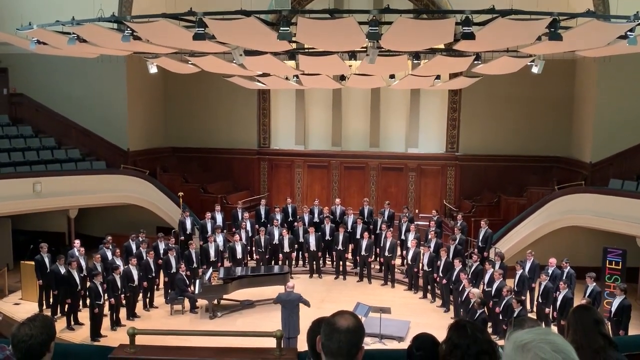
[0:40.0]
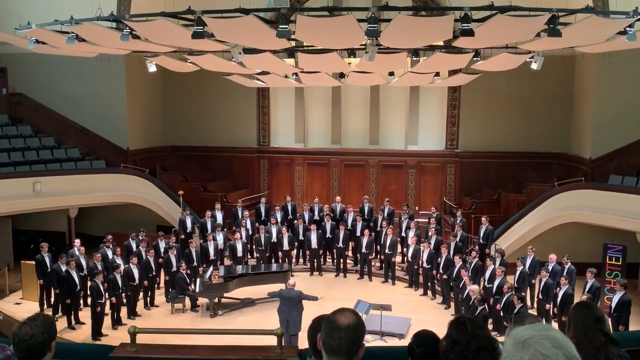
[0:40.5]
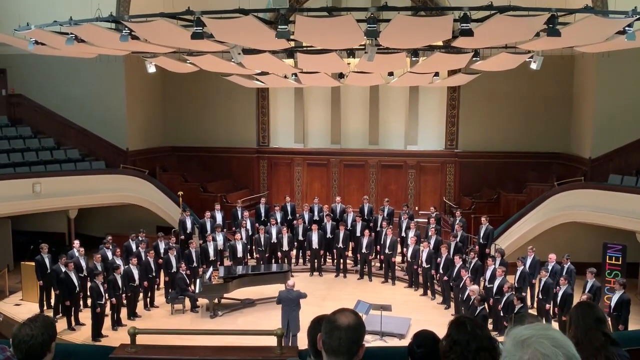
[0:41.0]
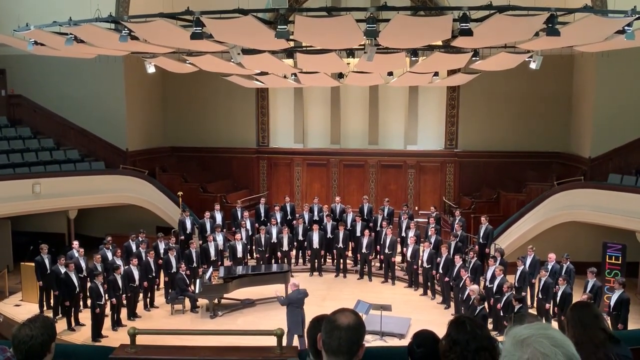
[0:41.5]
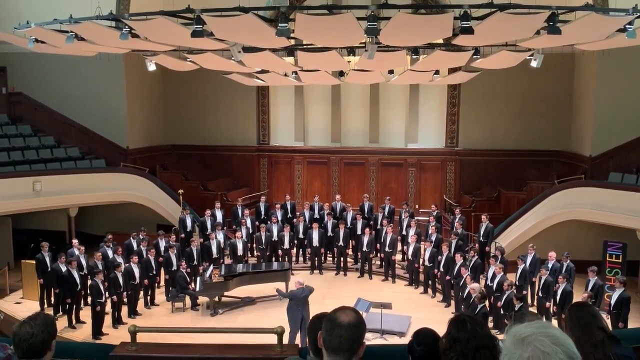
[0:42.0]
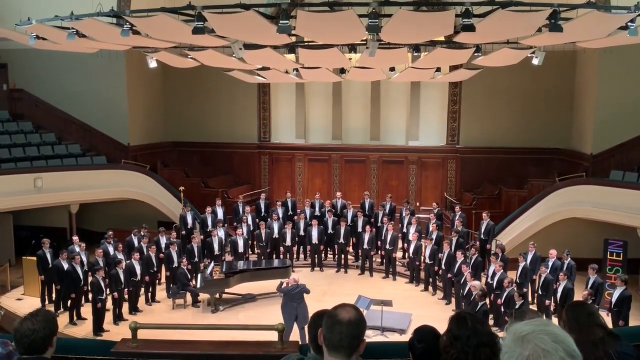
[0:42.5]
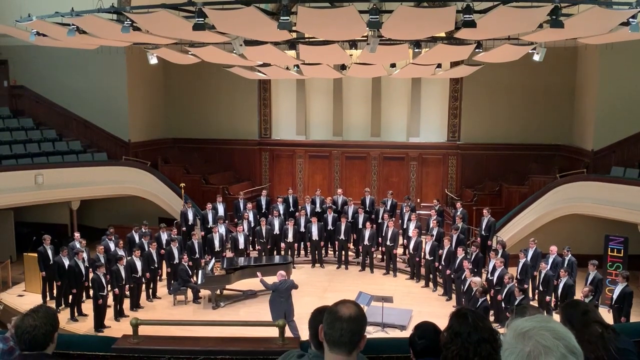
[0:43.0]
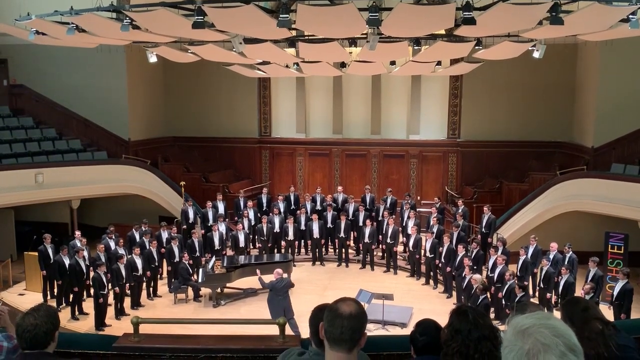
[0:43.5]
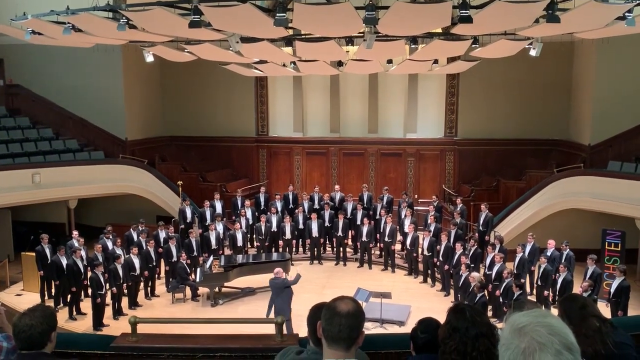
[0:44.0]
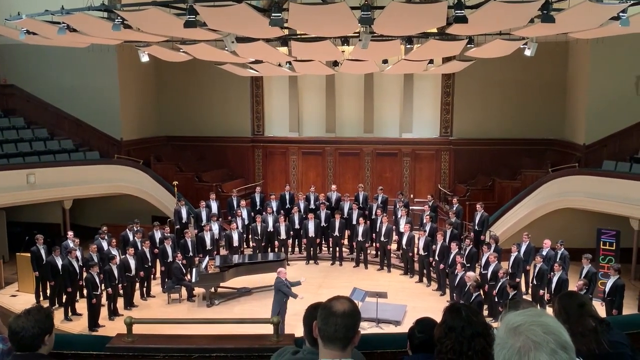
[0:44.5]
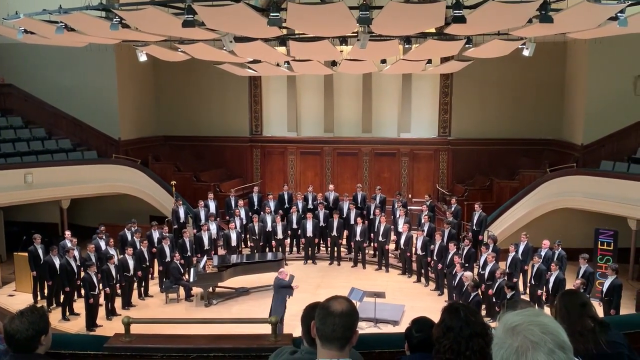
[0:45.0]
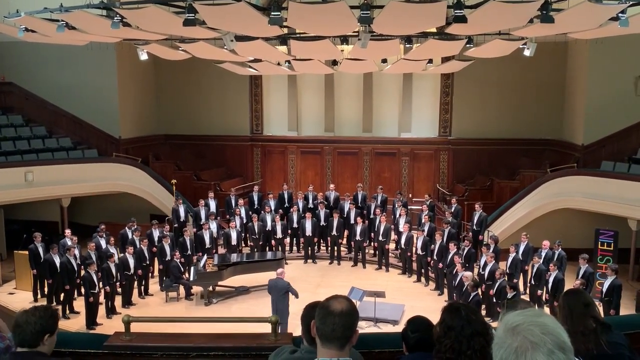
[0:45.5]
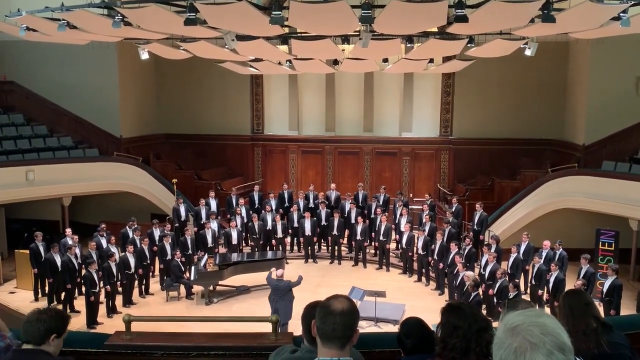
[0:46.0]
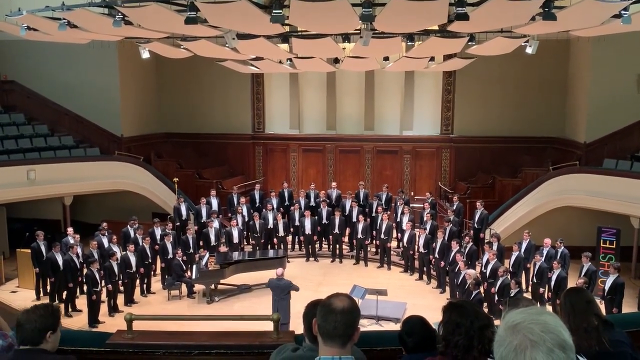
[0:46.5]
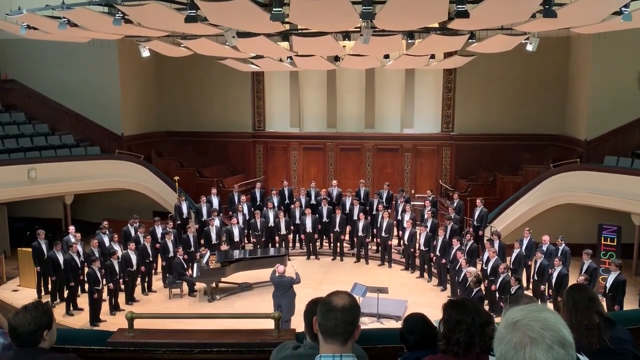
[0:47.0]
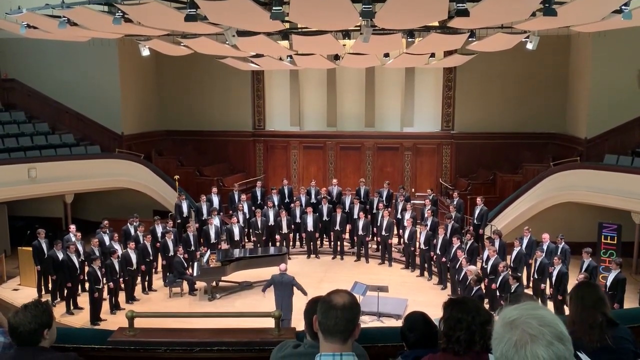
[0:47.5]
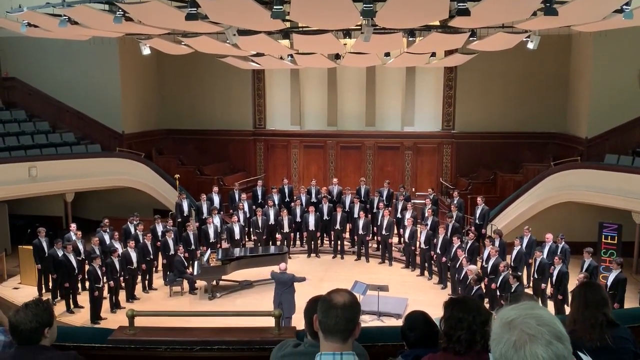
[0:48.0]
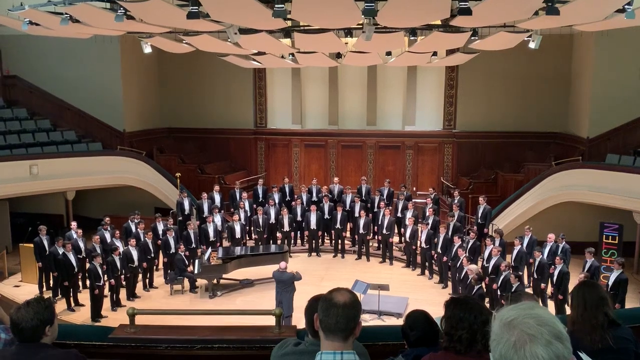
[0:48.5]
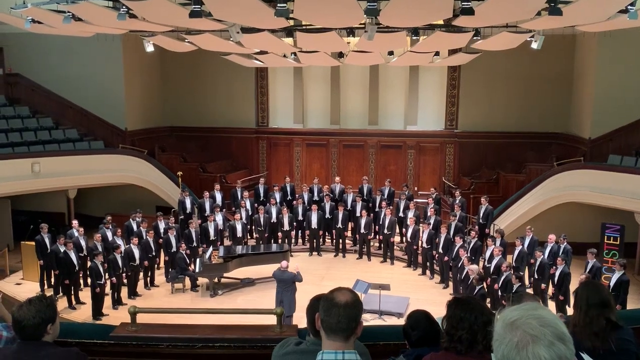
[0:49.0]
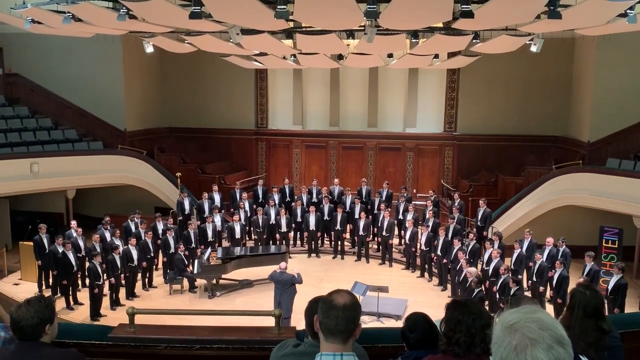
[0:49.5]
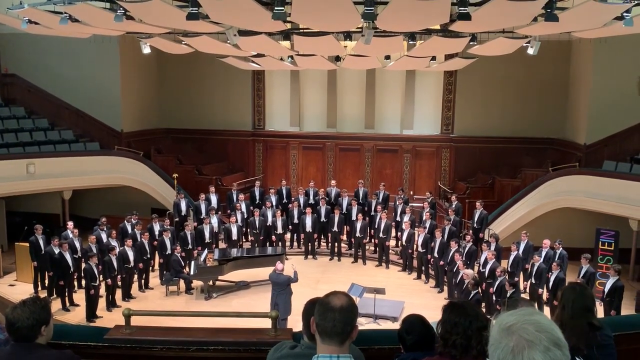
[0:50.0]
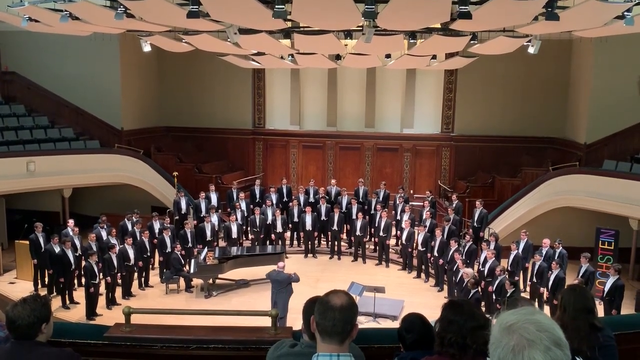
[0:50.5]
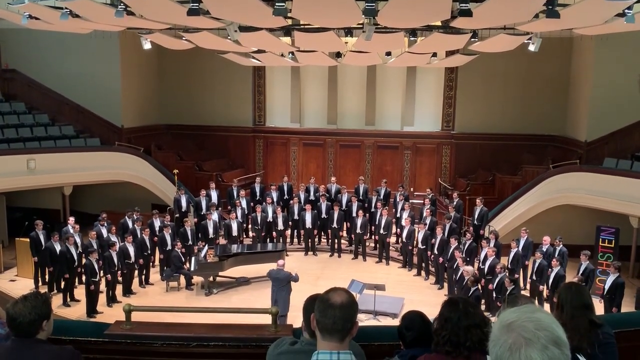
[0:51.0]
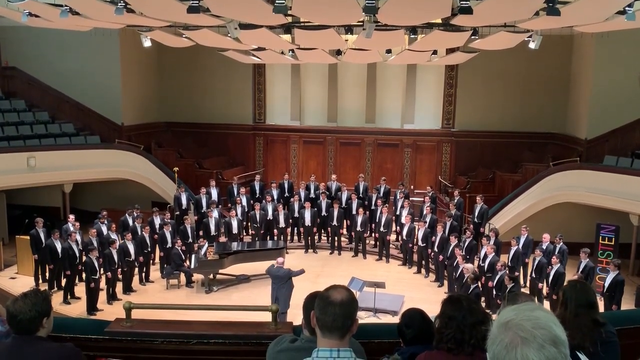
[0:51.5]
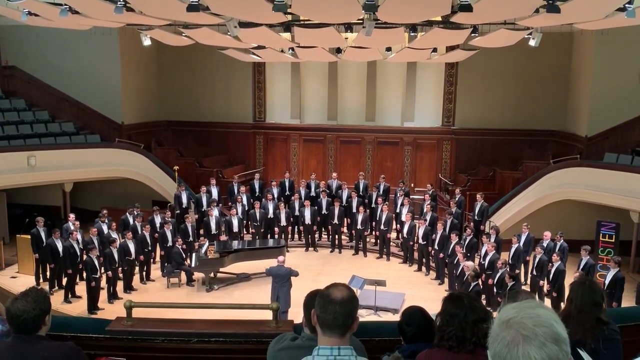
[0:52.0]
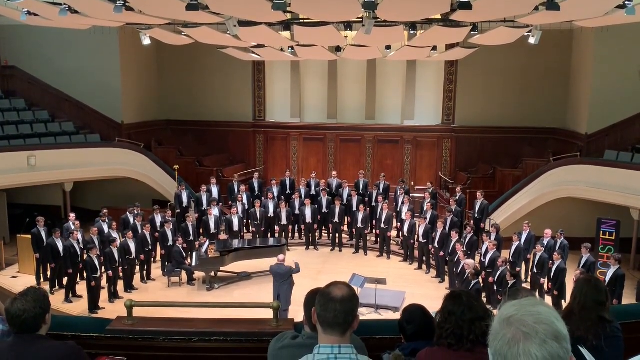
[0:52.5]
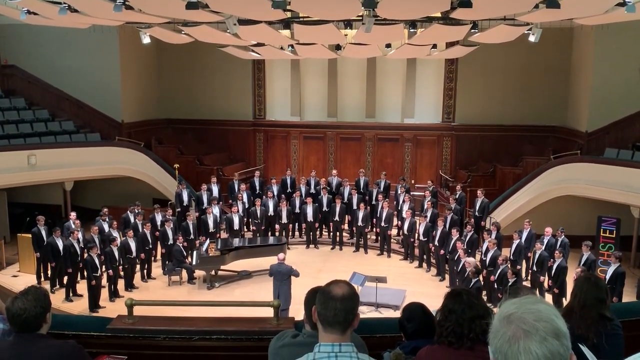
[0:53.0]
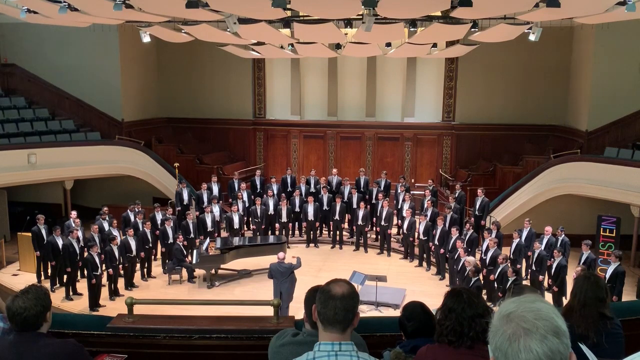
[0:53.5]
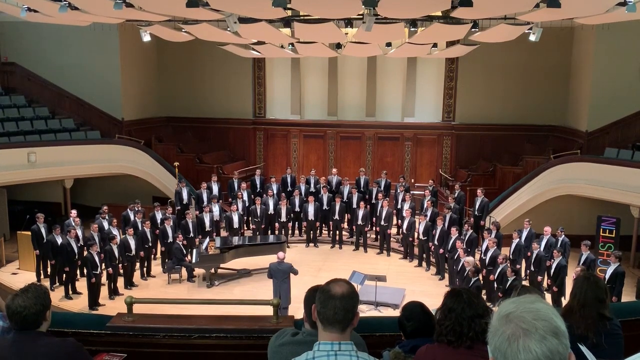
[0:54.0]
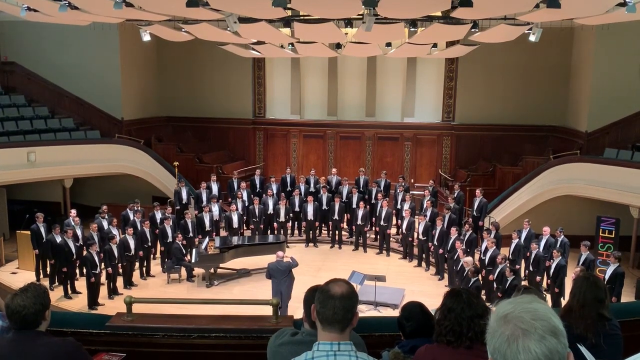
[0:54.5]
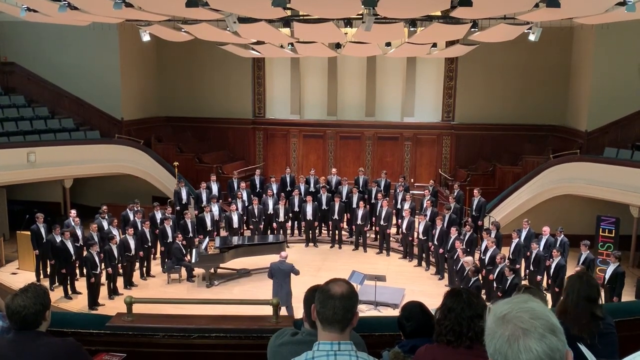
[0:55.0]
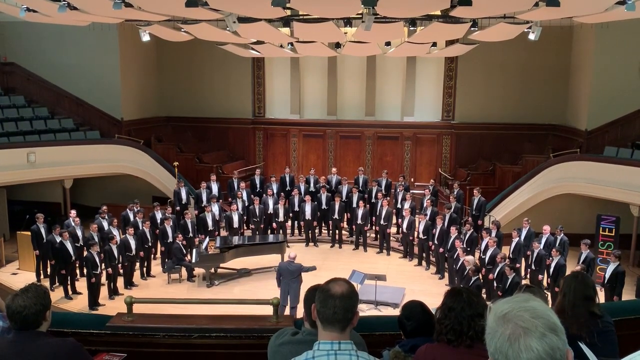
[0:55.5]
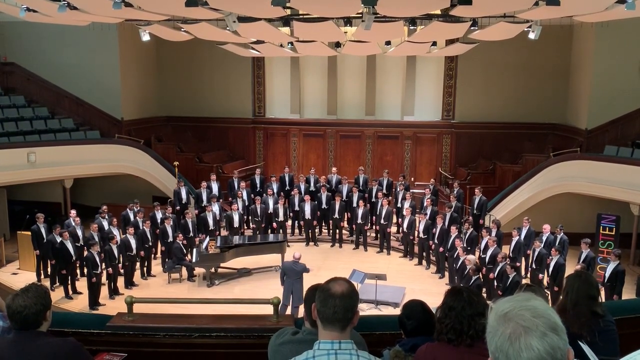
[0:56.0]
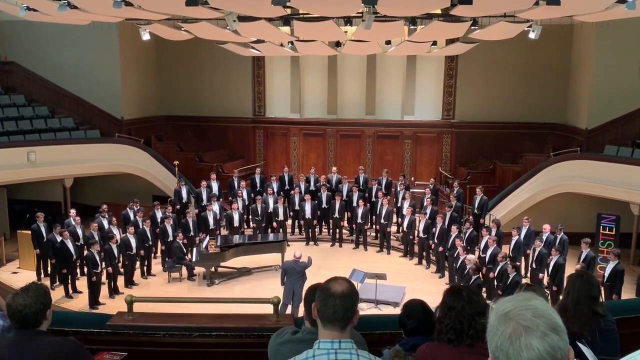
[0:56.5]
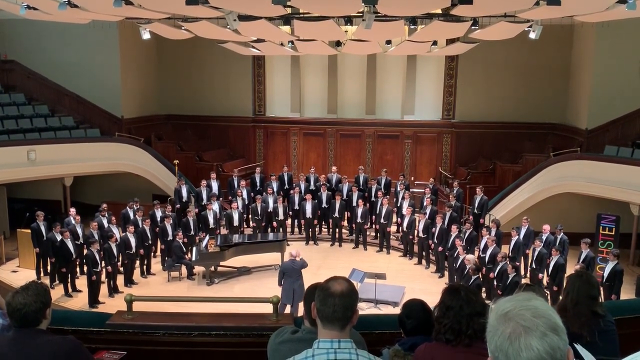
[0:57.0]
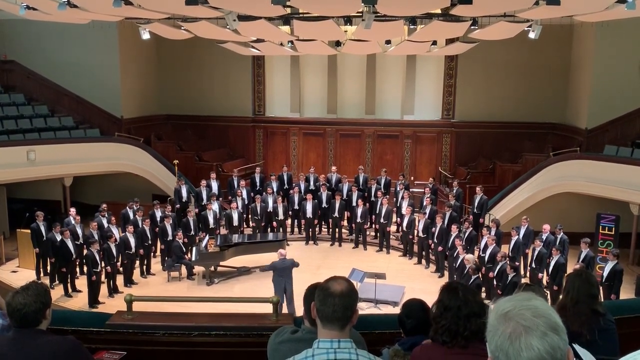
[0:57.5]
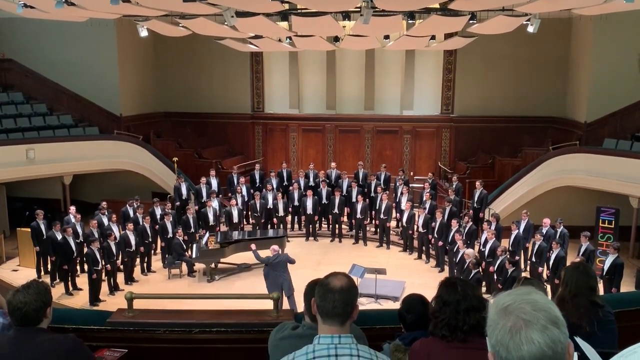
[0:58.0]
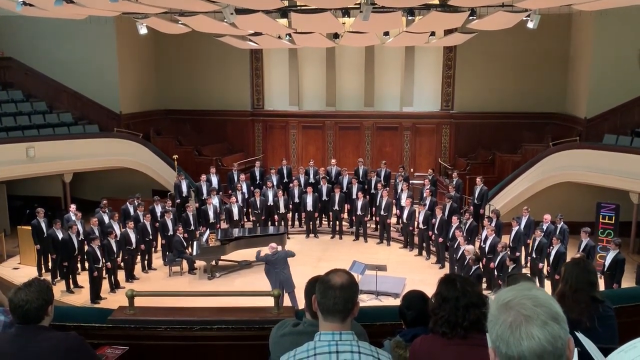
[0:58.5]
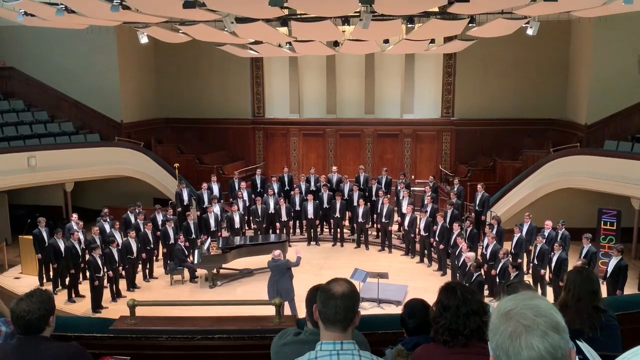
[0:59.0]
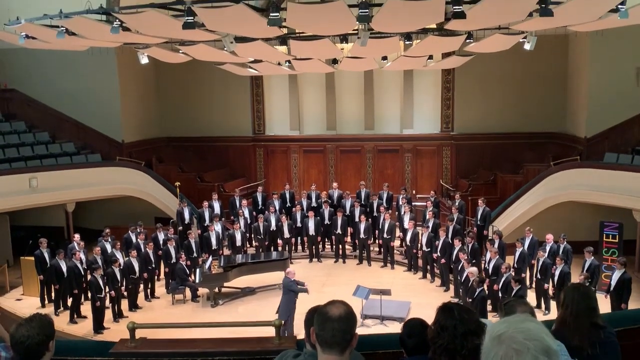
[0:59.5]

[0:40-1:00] The conductor conducts the men of his choir on a stage in a theater. The first semicircle of men stands on the floor of the theater, with at least two semicircles behind it on higher tiers so that all three are visible to the audience. The audience is at the bottom of the screen, seen from the backs of their heads, and sections of seating on a second level are visible to the right and left of the stage, higher up. The conductor, in the center, does not hold a baton. He starts off facing the vocalists in the center, then turns toward the left-hand side and points his left arm at the vocalists on the left in front of him to cue them in. He then turns to the vocalists on the right-hand side and cues them with his left arm as well, before moving back to the center. His arms move fairly gradually throughout. He turns toward the left a second time and then to the right a second time. The piano player appears to be sitting the whole time with his hands on his lap, not playing the piano.